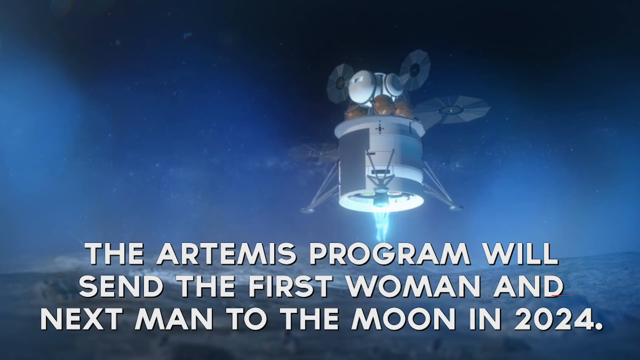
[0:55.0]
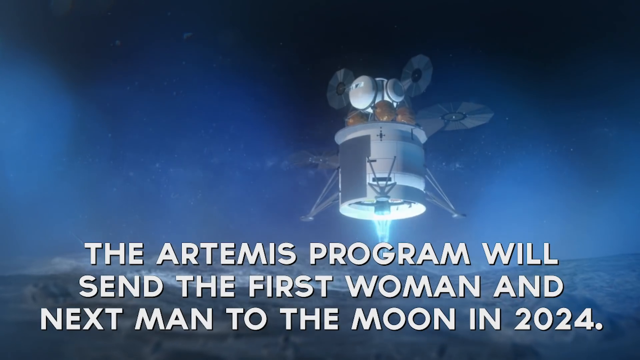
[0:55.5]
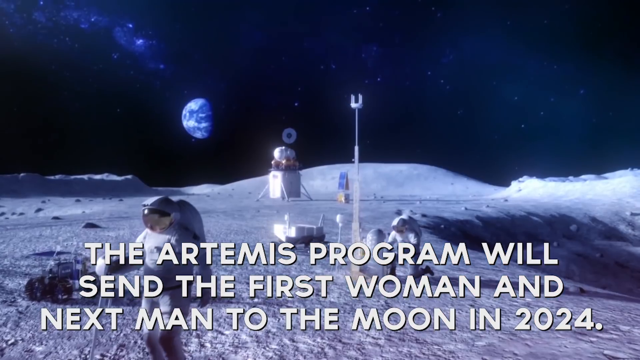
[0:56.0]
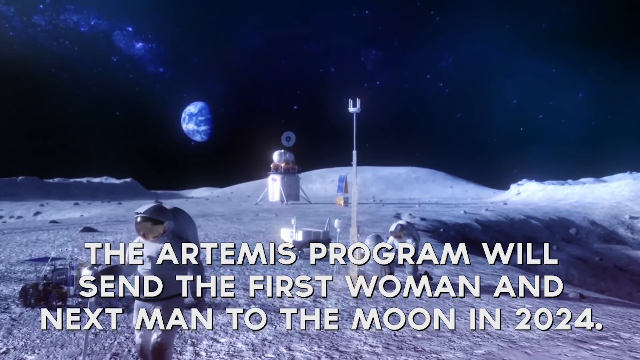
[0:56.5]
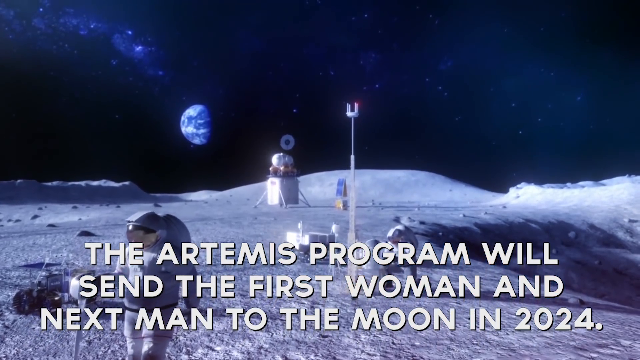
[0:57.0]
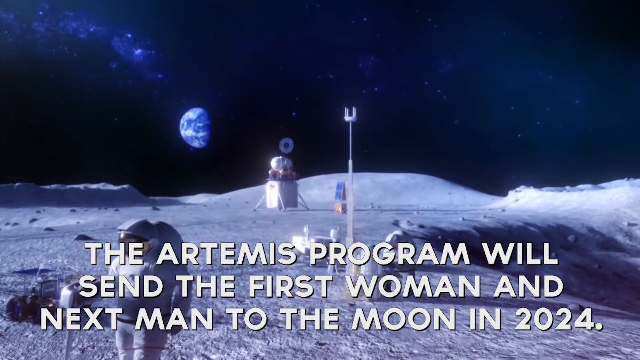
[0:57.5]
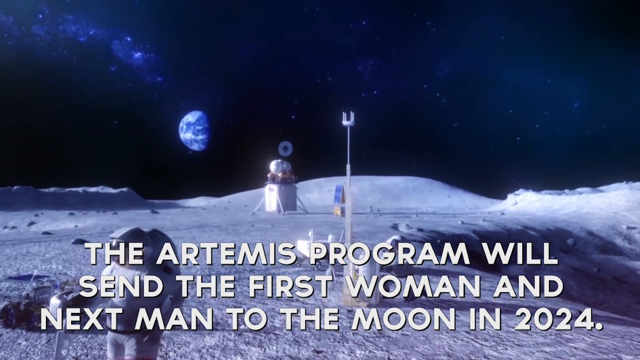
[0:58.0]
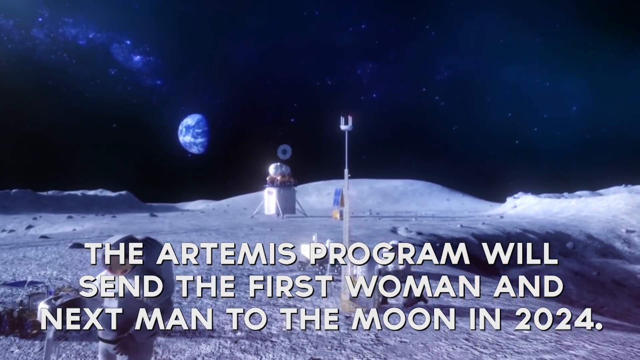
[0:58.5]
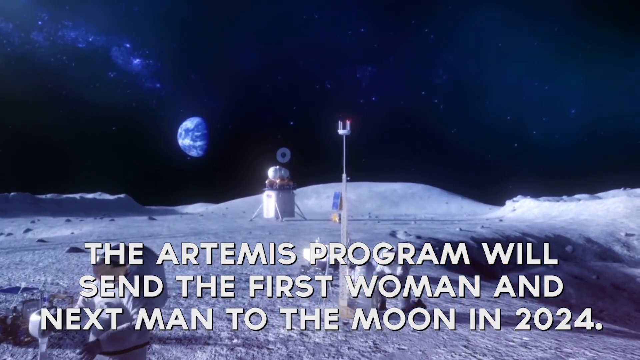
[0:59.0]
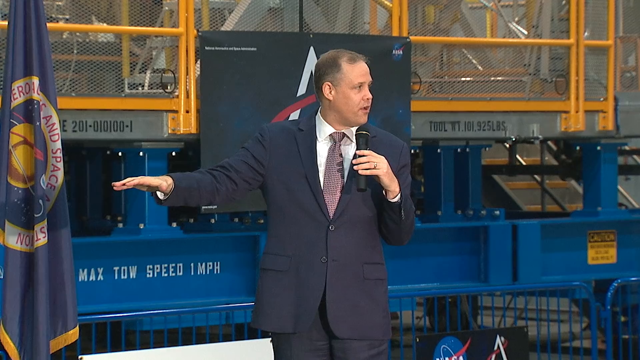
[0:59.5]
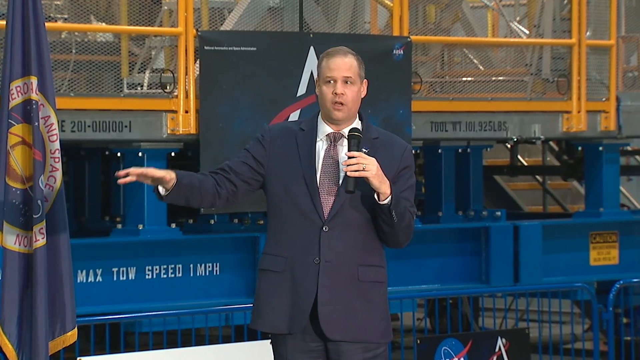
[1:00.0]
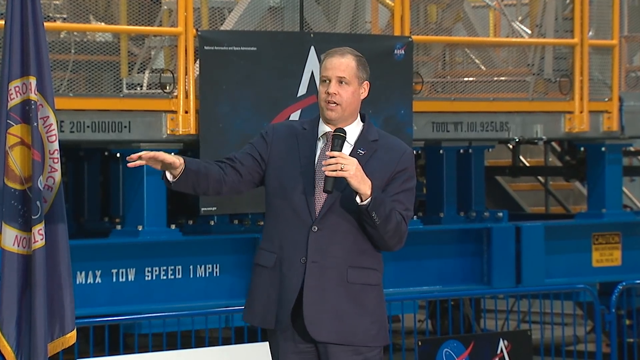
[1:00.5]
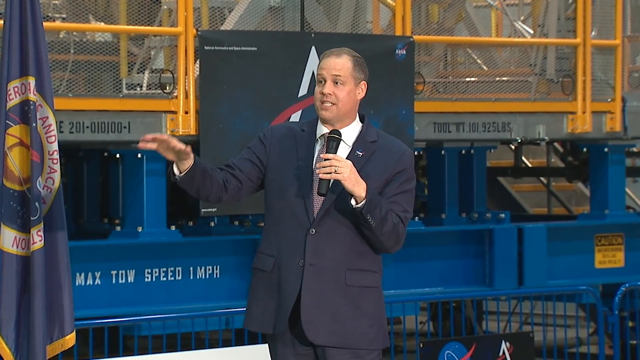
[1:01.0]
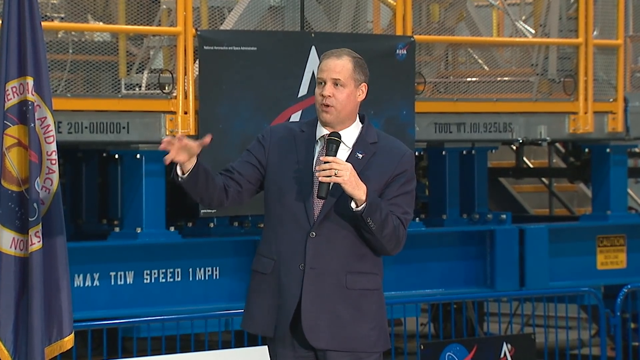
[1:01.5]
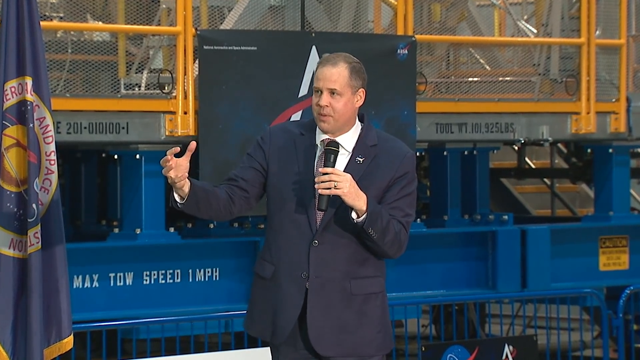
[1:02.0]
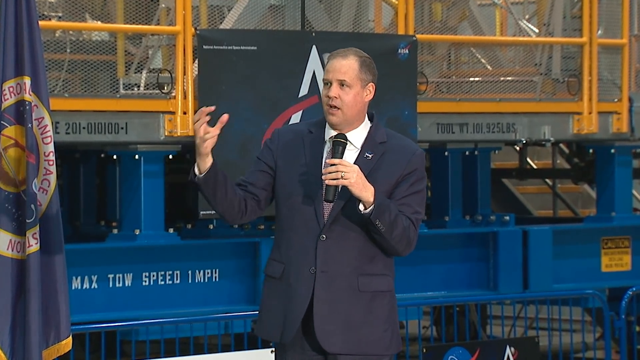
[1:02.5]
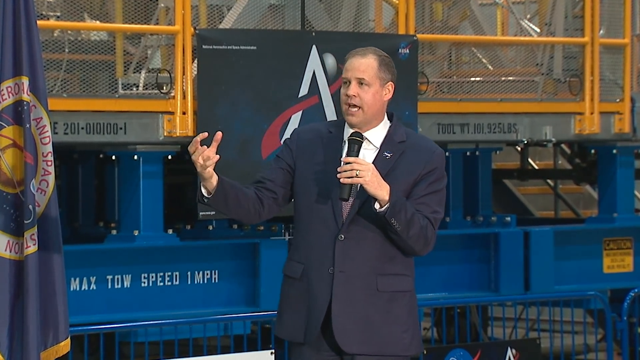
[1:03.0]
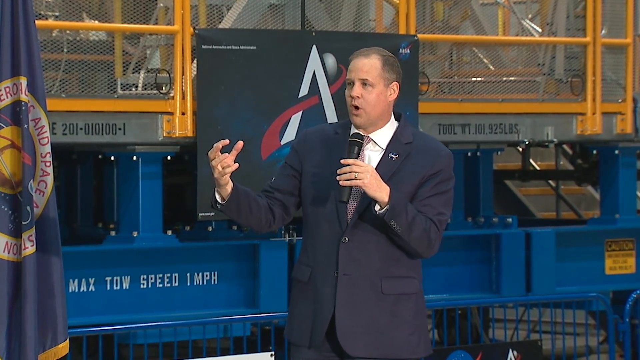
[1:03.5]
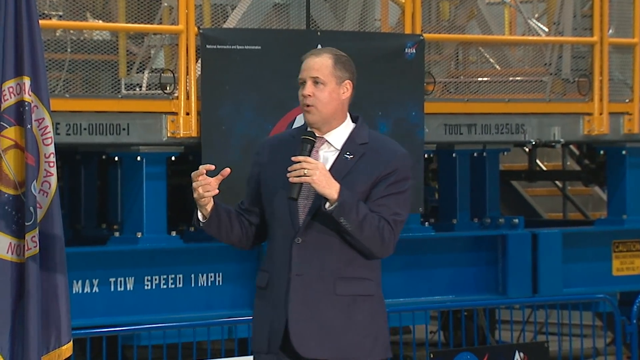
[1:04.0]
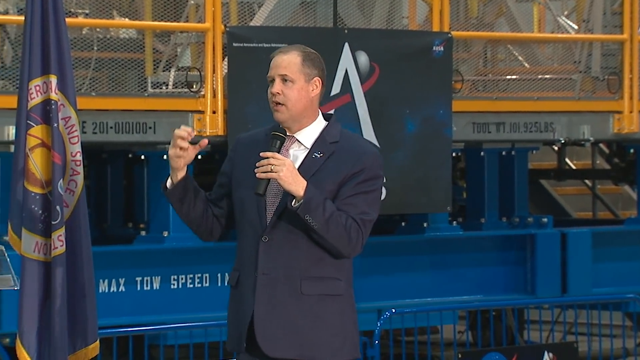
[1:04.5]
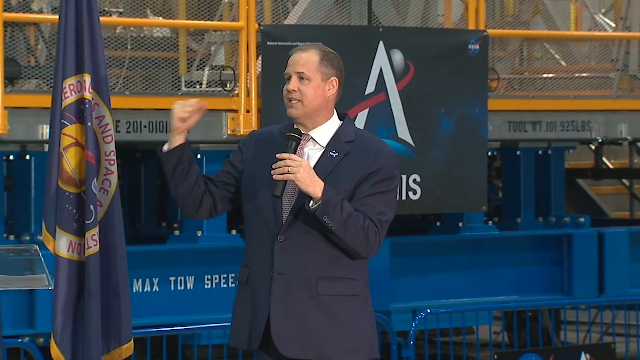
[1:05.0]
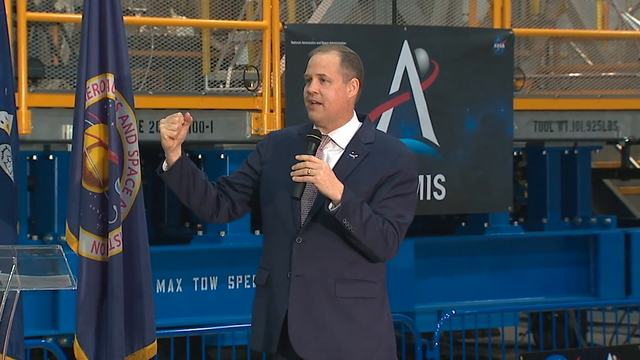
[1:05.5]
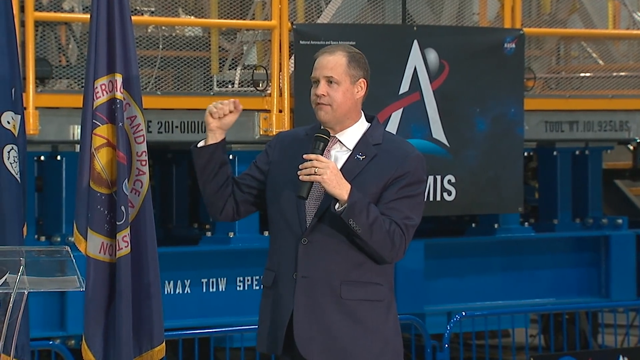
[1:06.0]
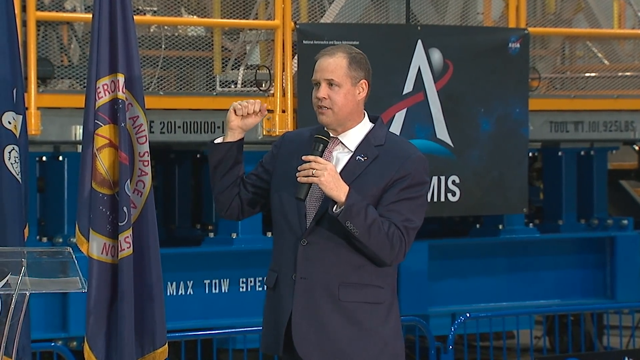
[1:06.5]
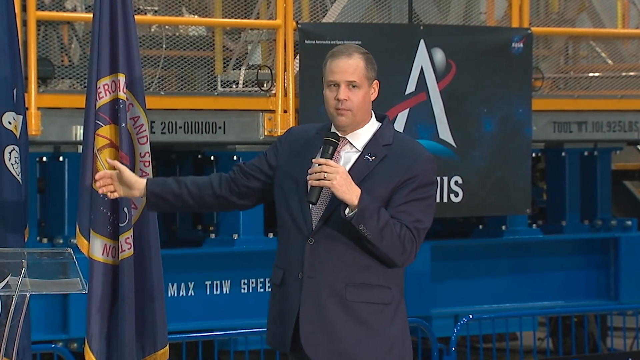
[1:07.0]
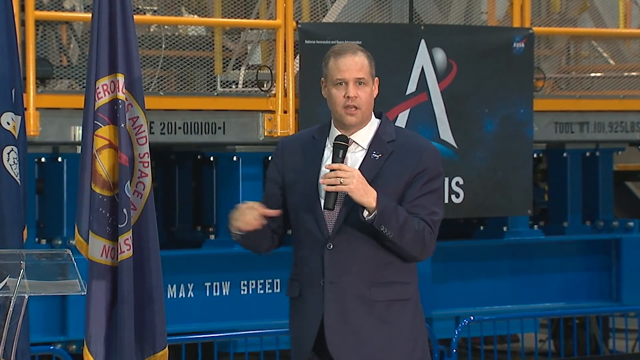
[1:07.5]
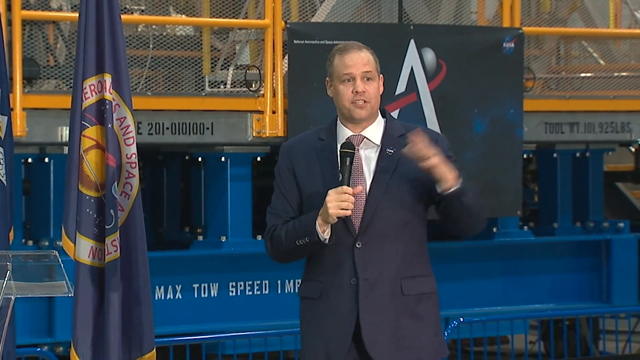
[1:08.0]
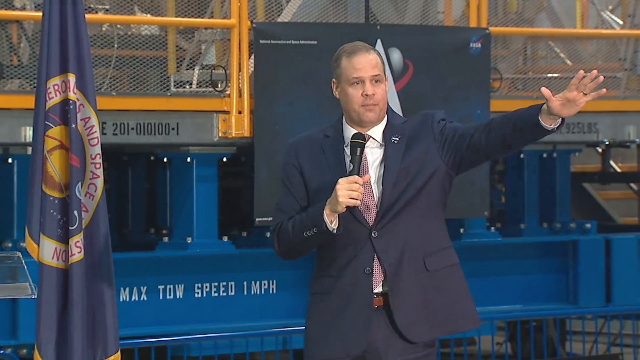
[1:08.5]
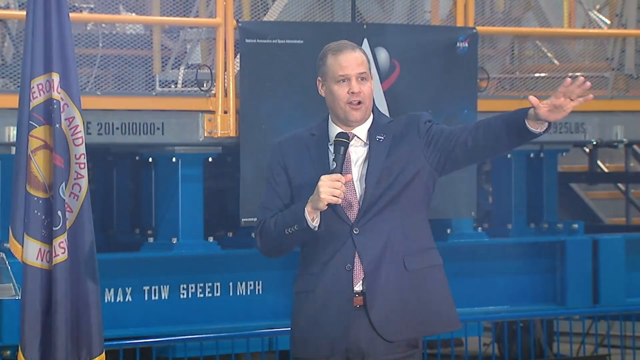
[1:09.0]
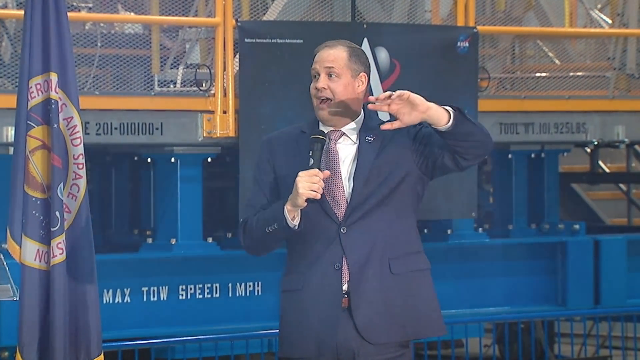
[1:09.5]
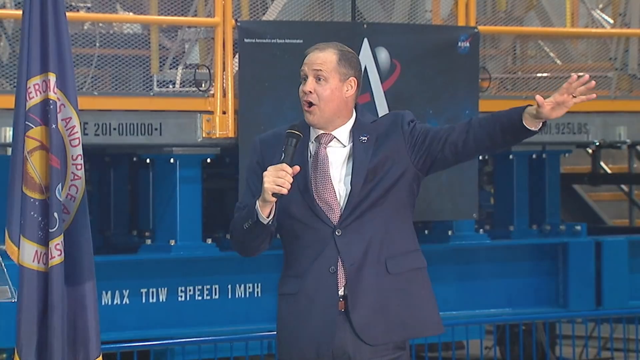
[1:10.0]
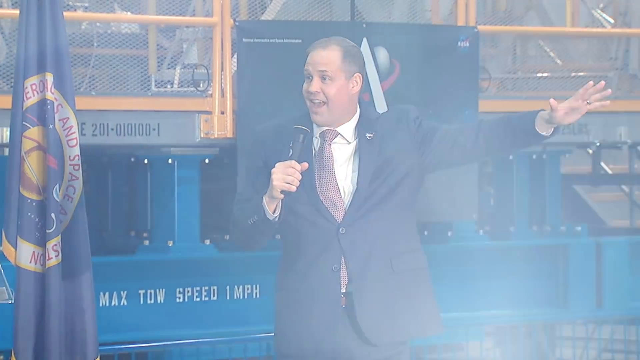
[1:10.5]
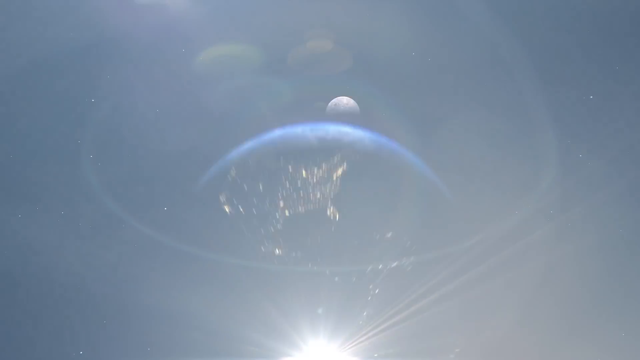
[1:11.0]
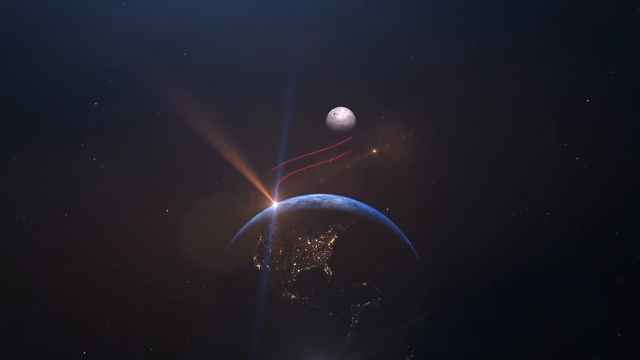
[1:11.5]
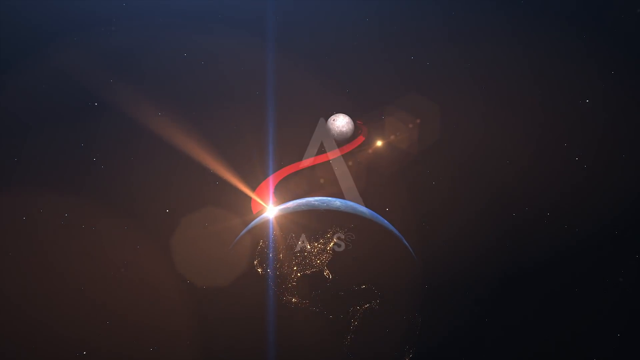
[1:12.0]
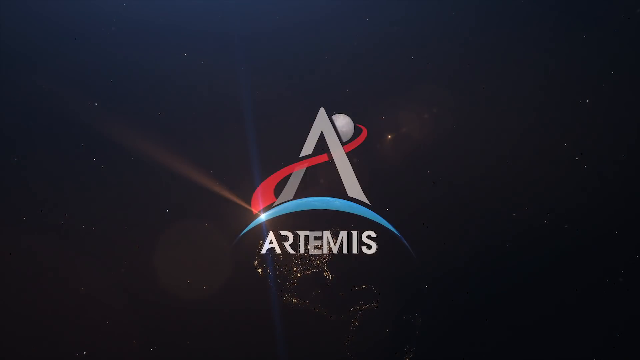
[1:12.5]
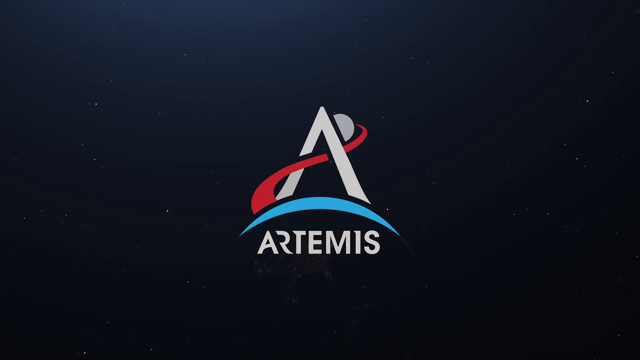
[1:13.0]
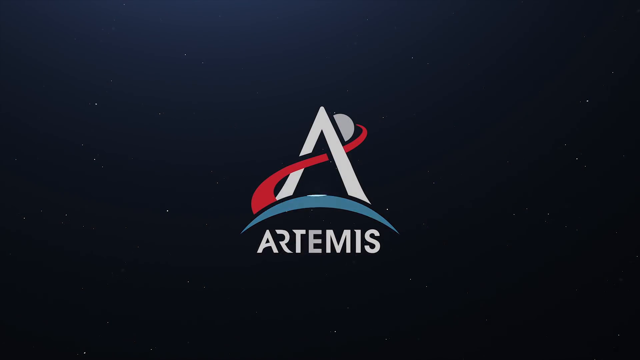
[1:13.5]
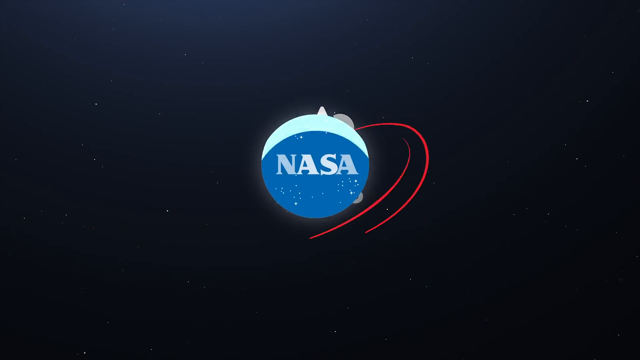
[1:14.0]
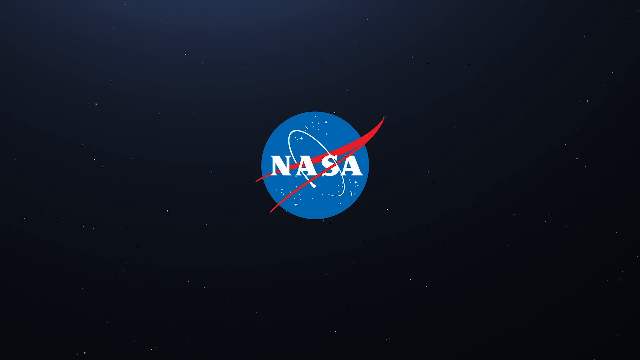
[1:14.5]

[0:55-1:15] The same man in his two-piece suit is on stage talking, apparently about the Artemis project and NASA. Text again reads "the Artemis program will send the first woman and next man to the moon in 2024." The moon is also shown.